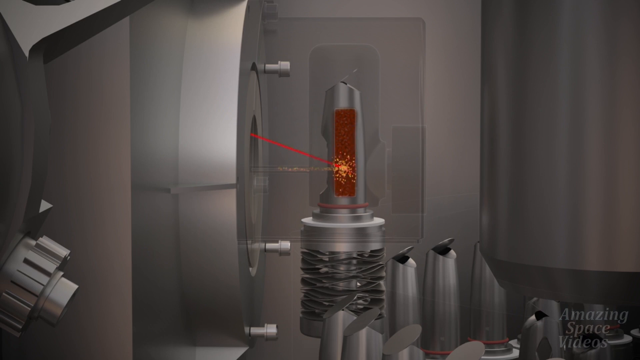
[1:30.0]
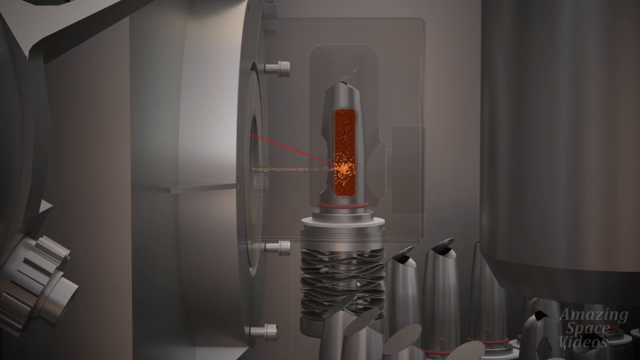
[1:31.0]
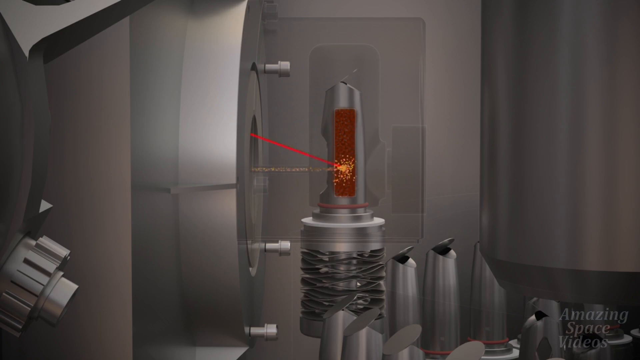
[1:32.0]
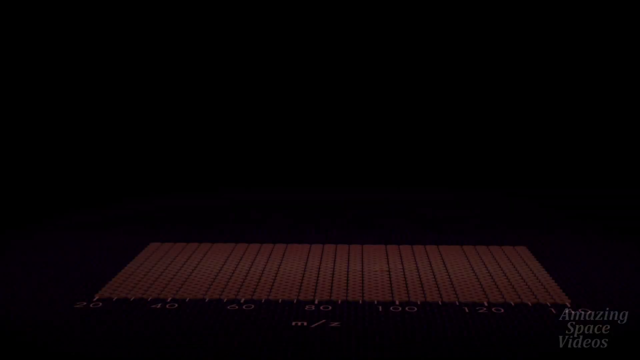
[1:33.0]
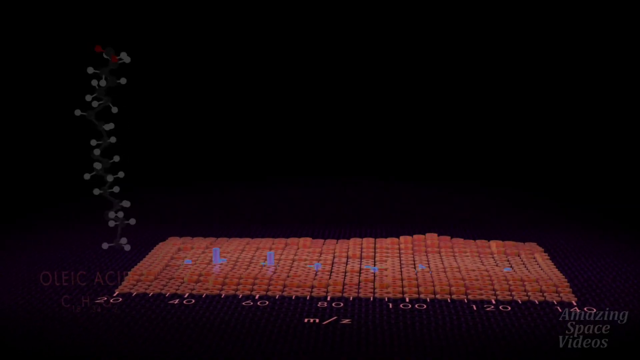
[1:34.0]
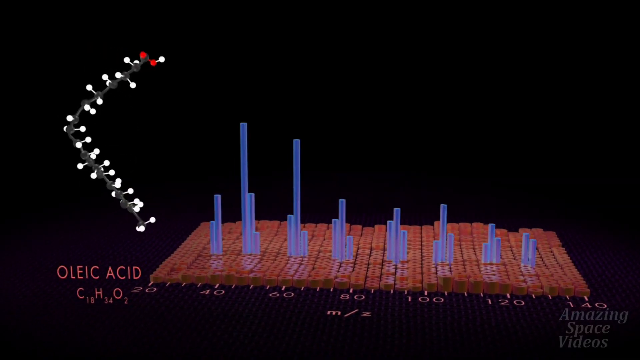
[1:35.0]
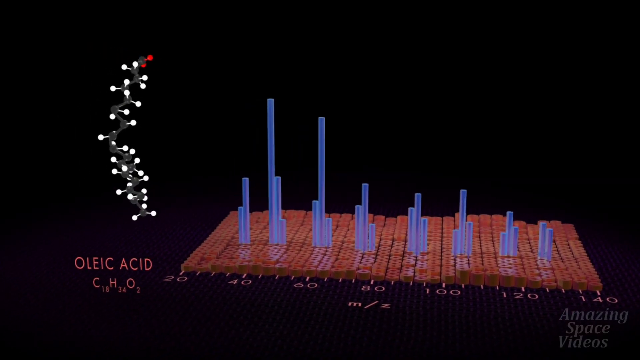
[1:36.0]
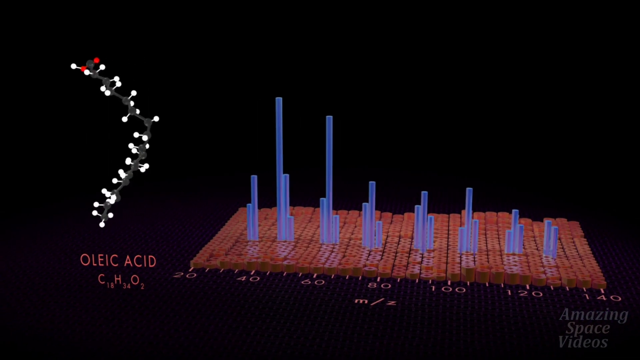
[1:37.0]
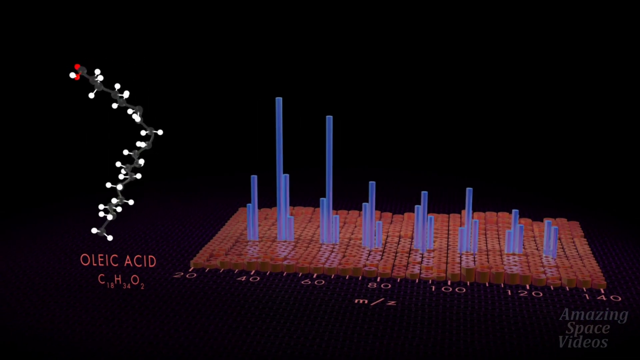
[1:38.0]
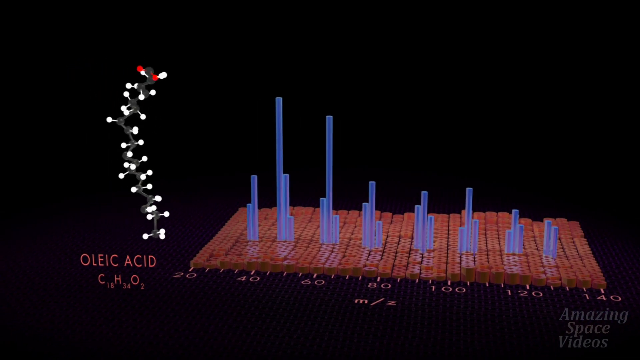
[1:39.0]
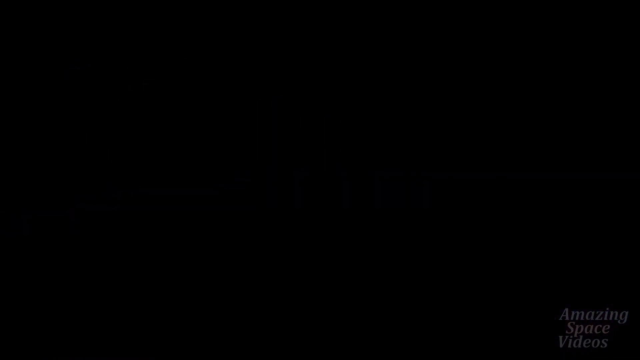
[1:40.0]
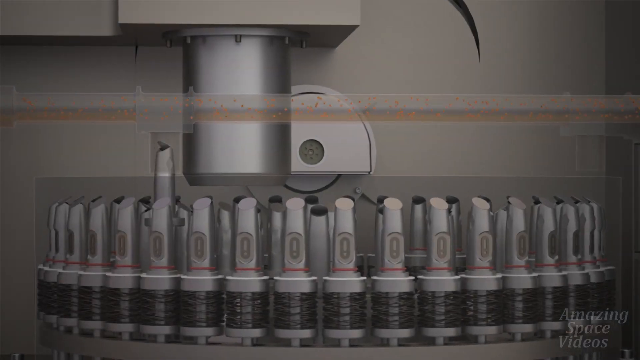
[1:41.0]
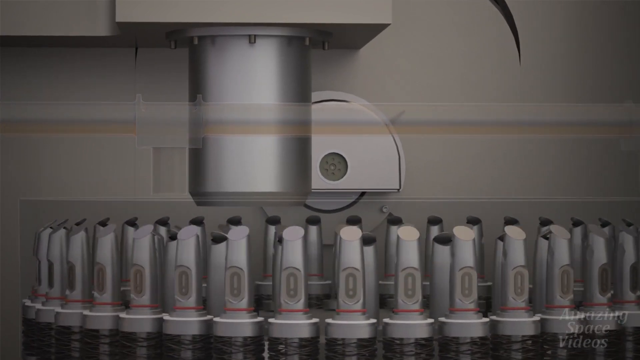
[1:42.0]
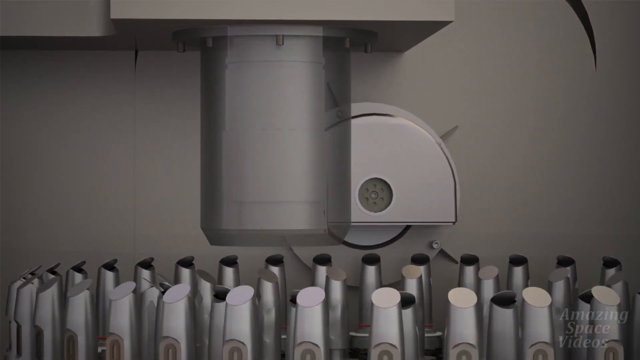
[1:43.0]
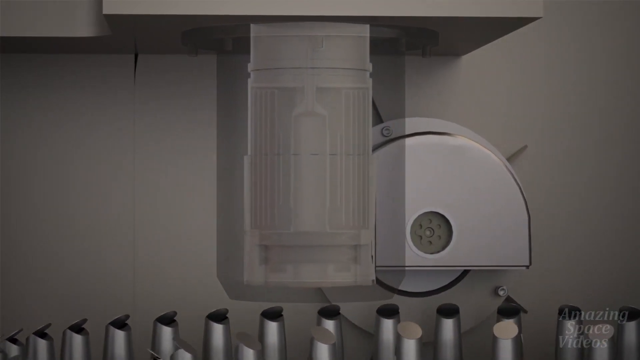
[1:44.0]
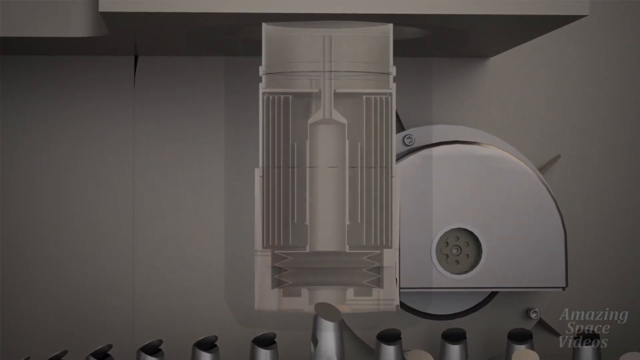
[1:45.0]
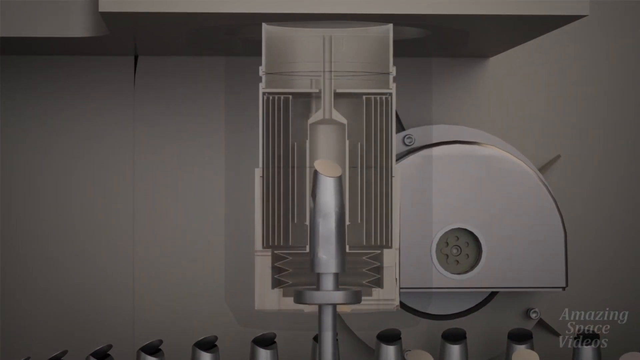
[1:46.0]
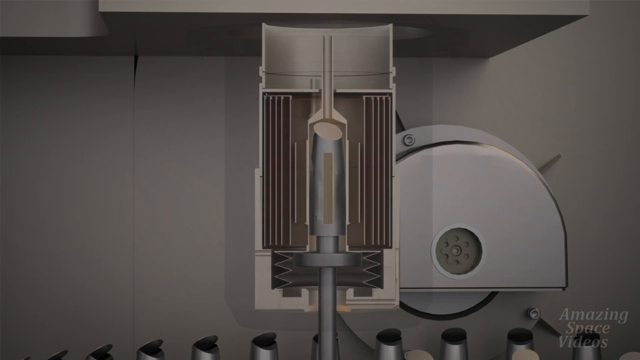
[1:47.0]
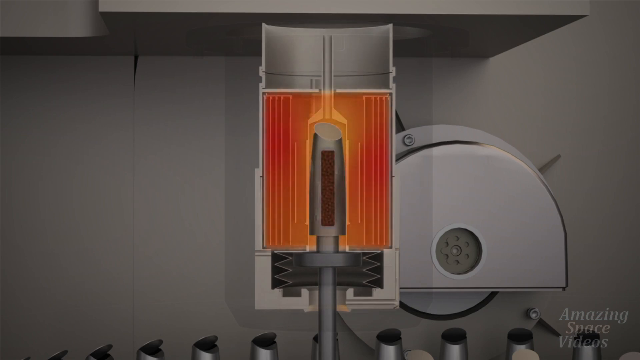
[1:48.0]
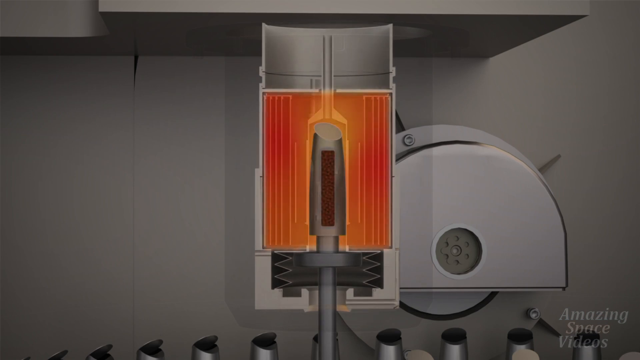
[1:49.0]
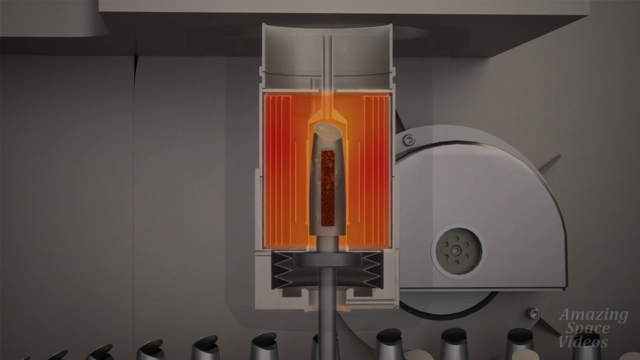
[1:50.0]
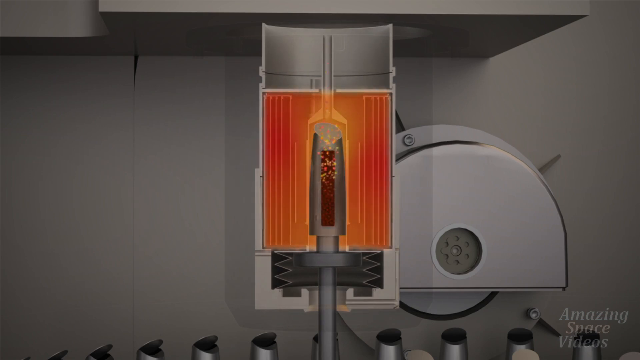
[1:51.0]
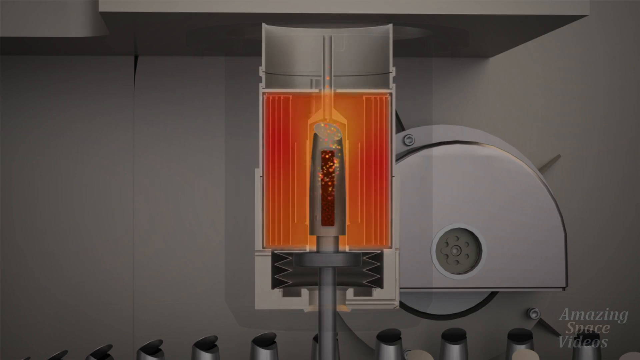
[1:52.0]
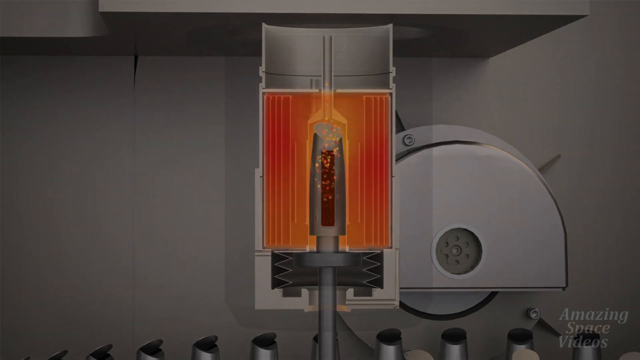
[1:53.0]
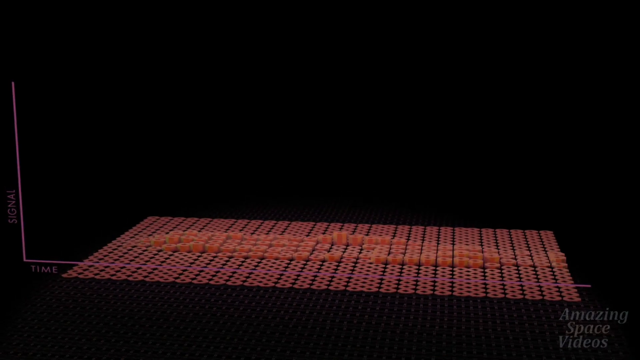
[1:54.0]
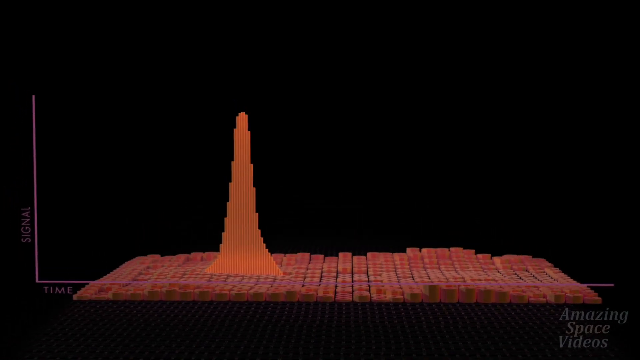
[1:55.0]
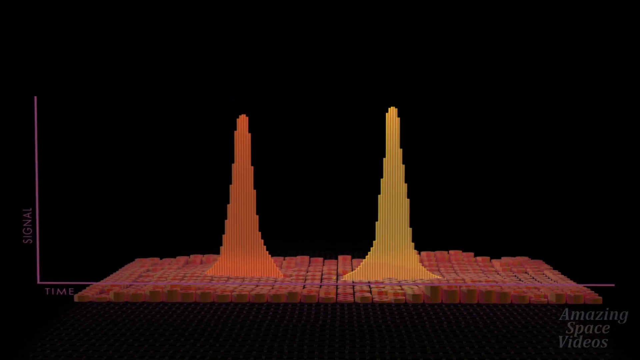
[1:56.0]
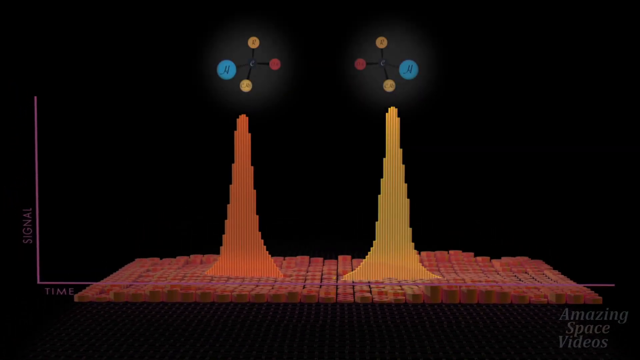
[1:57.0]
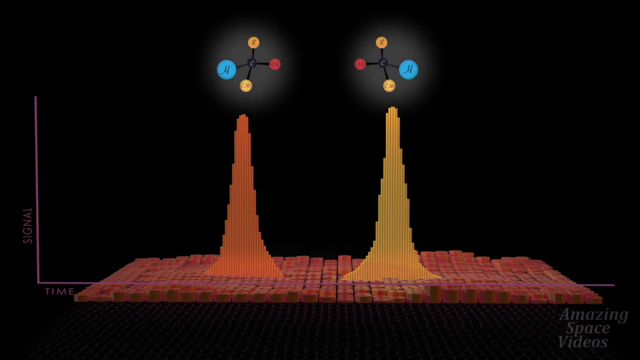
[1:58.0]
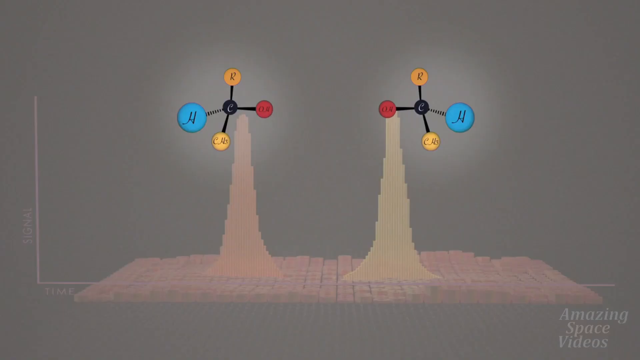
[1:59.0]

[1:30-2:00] A 3D rendering shows a metal tube filled with a brown substance. It is blasted from the left by a round metal assembly with a laser coming from its top, and a line runs from the tube going left back into the round assembly. The laser turns the brown substance inside the tube into a yellow substance and moves it toward the left. The rendering changes to a flat brown surface with multiple rectangular bars forming a sort of bar chart. On the left it reads "oleic acid C18H34O2", and above it is a DNA strand-like figure: a curved gray line with multiple white balls coming from it and two red balls at the very top. The screen fades to black and shows a metal assembly of machinery containing multiple metal tubes with small windows. The assembly spins counterclockwise and the camera zooms in on a large cylinder above them. The metal casing around the cylinder disappears, one of the smaller tubes is inserted into the cylinder, and the cylinder starts to heat up with orange.